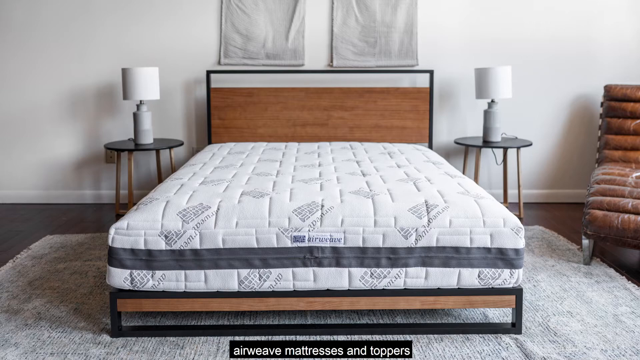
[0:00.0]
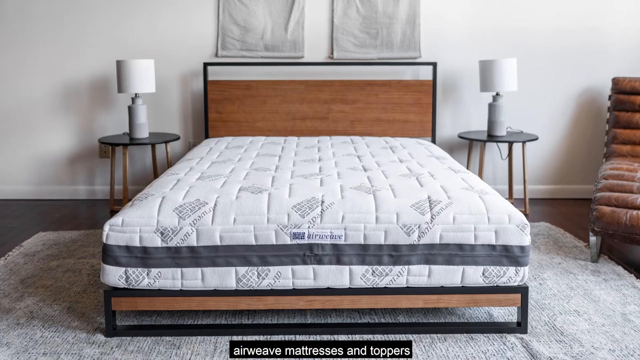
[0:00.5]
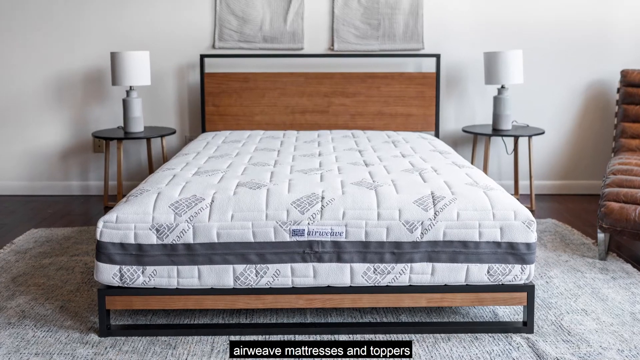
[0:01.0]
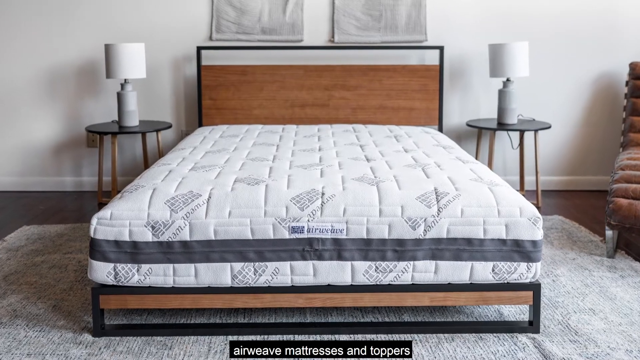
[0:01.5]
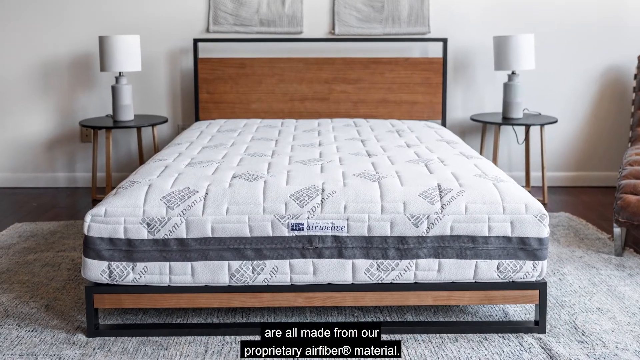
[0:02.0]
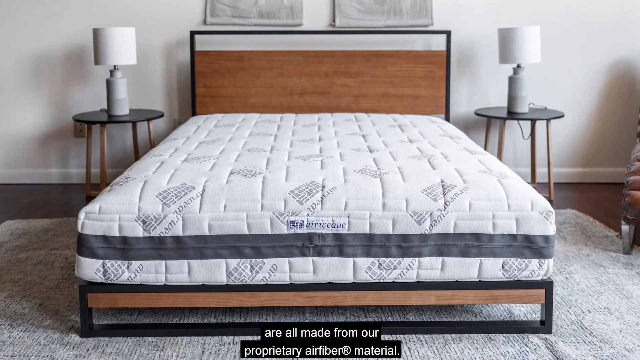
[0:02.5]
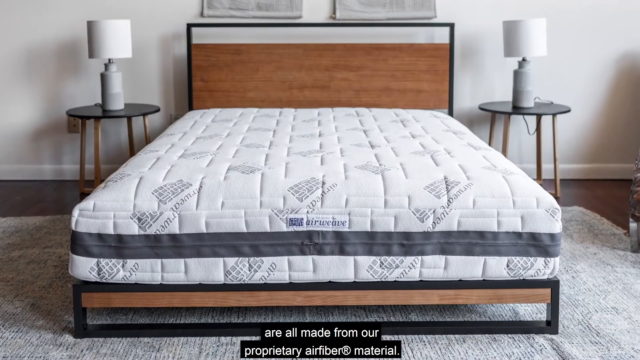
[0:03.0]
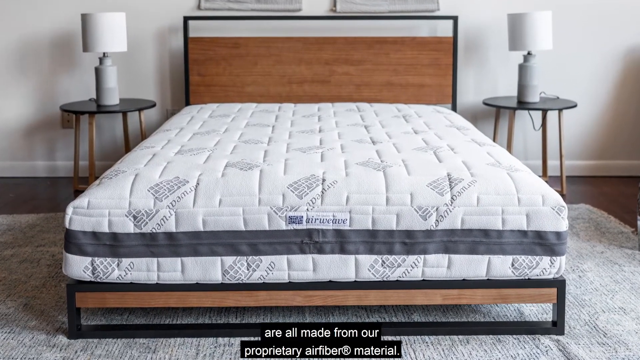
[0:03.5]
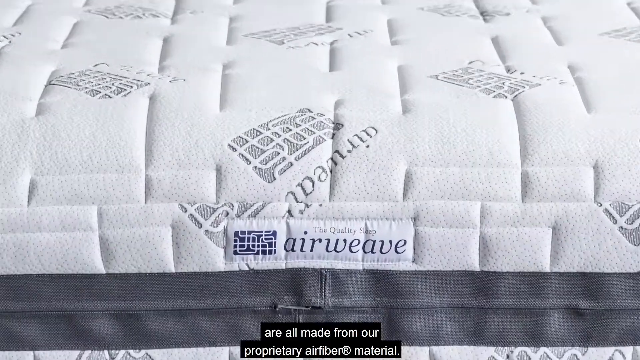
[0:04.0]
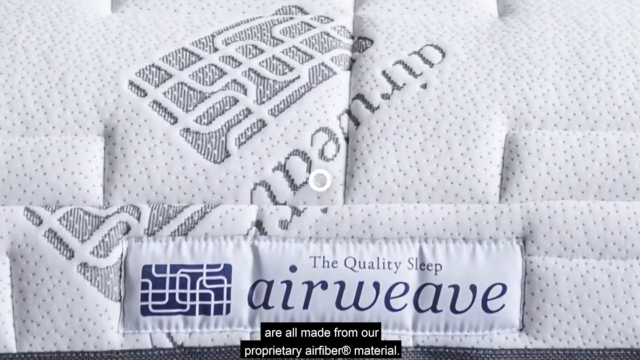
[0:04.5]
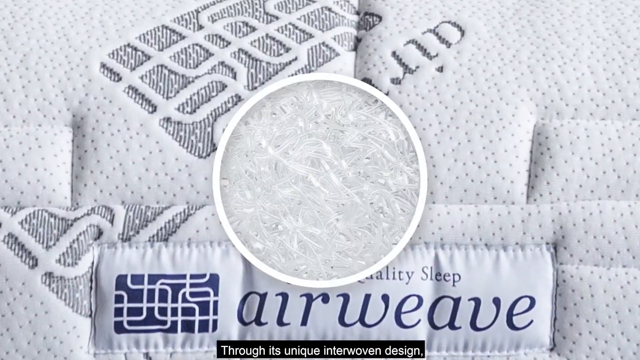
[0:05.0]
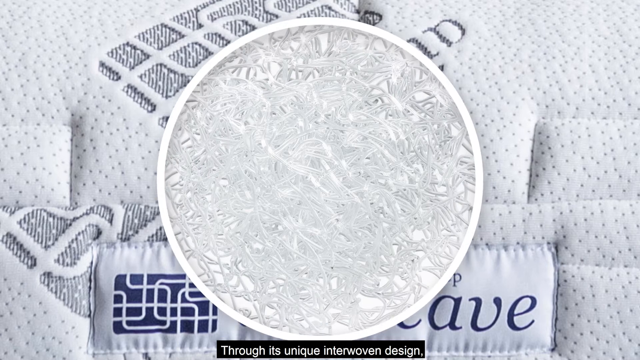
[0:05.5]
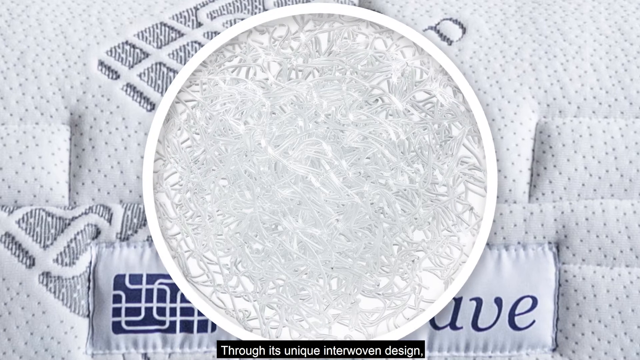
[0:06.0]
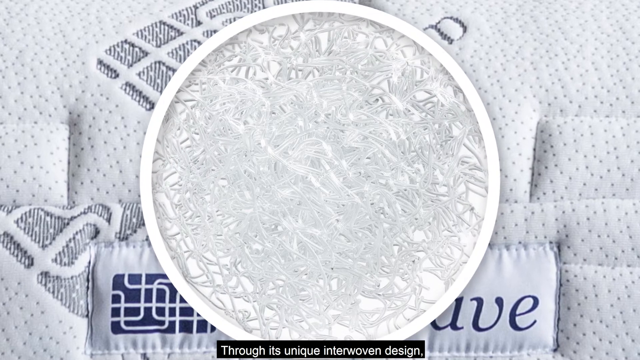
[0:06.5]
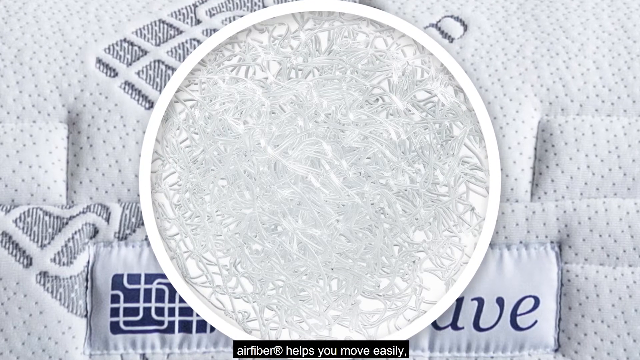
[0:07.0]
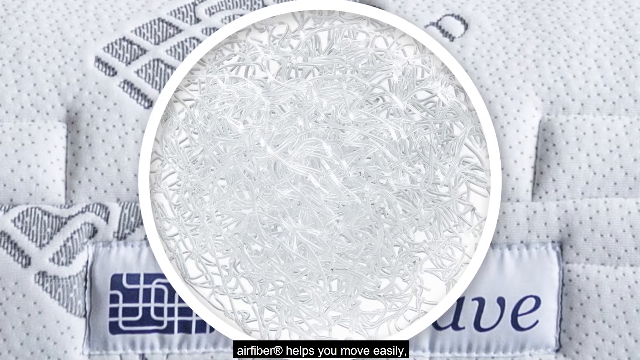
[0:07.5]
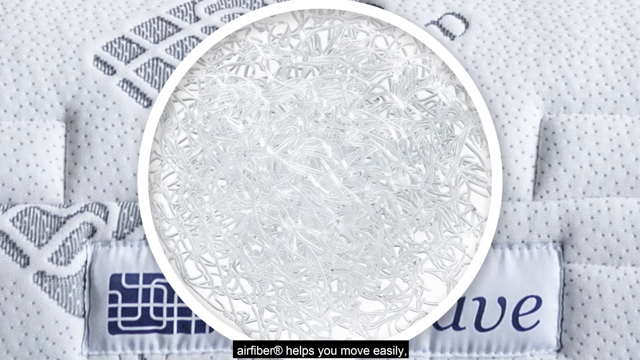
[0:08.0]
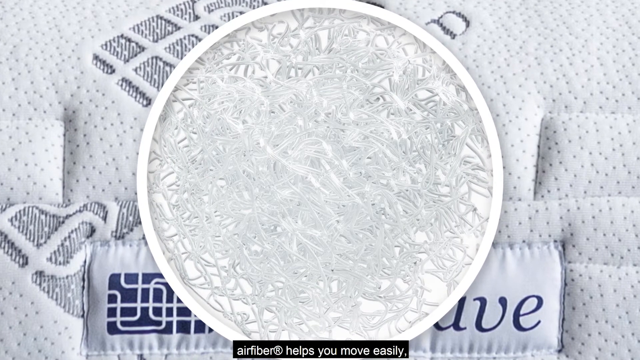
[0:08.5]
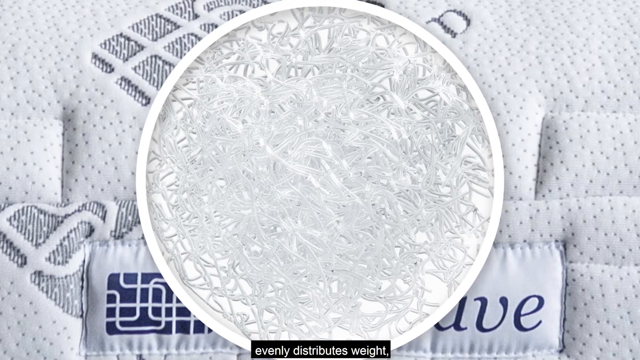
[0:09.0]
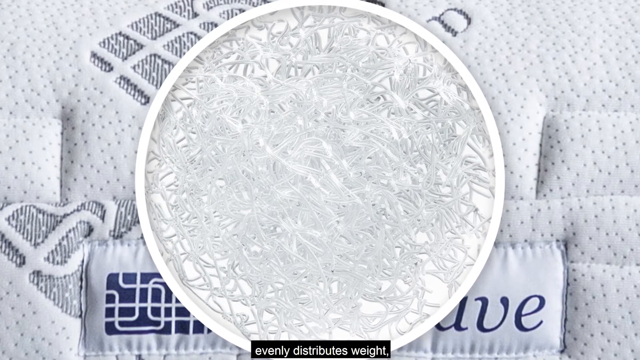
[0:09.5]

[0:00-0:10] A photo shows a bedroom with a large queen-sized mattress with no sheets or blanket on it, on a bed with a brown wooden headrest. There are two round black end tables with small light gray cylinder lamps with white lampshades. A brown sleeper sofa is to the right side, and a large gray area rug is on the ground. Two rectangular cloth squares hang above the headrest, possibly in place of artwork. The camera view zooms in onto the label on the foot of the mattress, which reads "The Quality sleep, Airweave." A large circle then appears on the screen, apparently showing a zoomed-in view of the fibers: very small, thin, skinny, bright white fibers that are kind of woven close to each other.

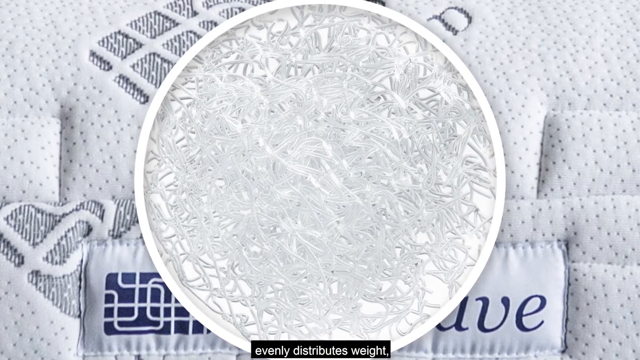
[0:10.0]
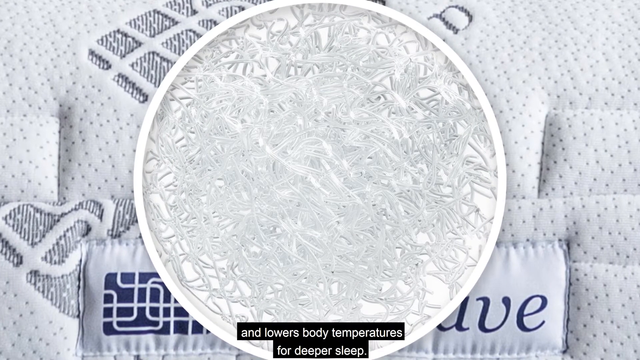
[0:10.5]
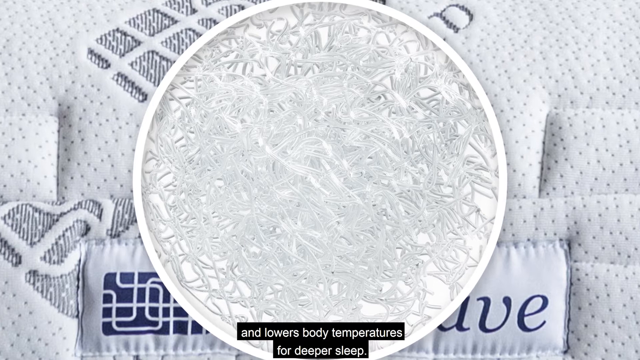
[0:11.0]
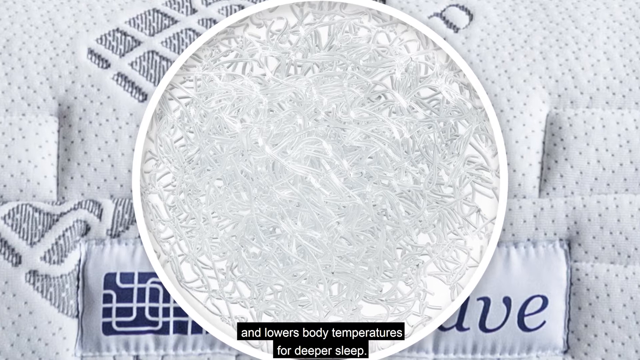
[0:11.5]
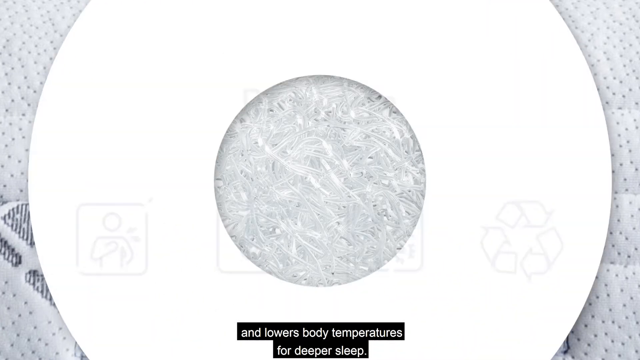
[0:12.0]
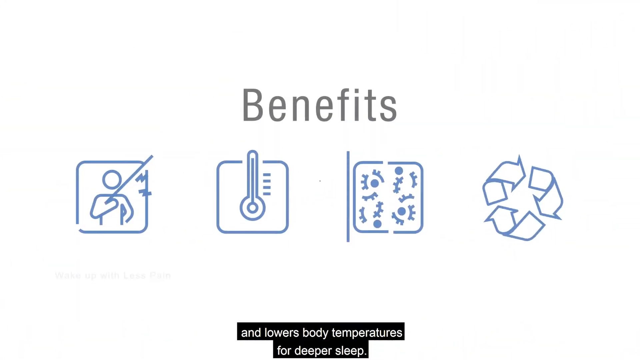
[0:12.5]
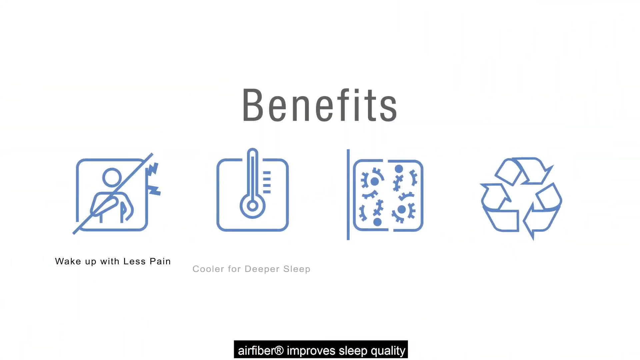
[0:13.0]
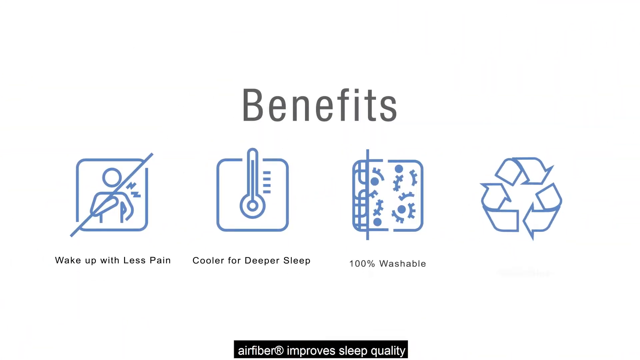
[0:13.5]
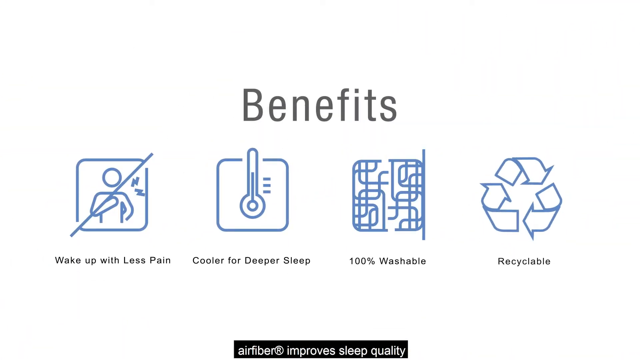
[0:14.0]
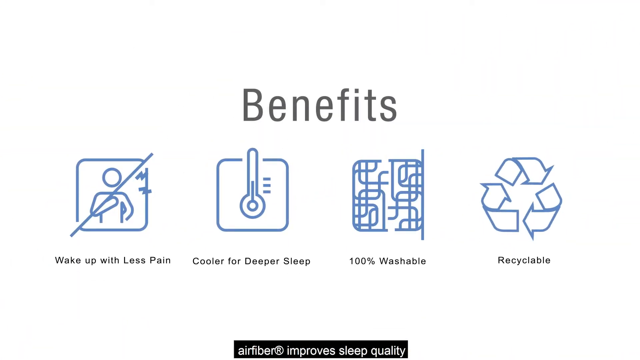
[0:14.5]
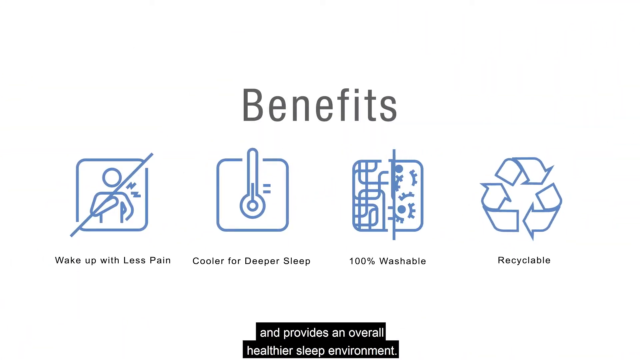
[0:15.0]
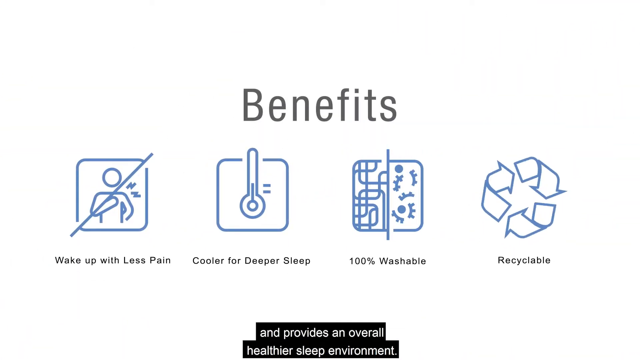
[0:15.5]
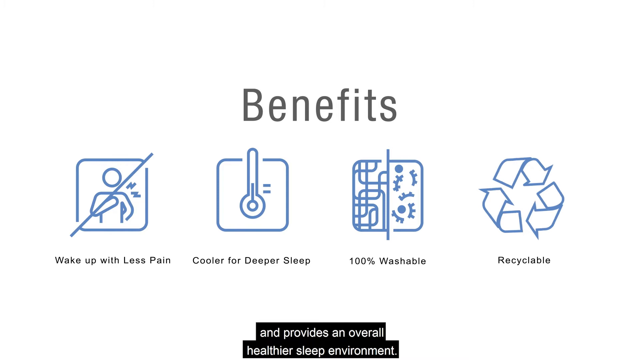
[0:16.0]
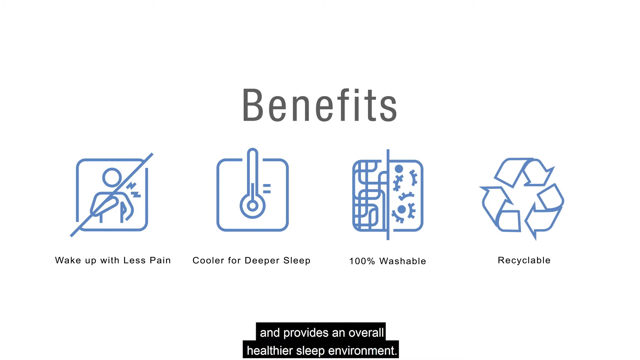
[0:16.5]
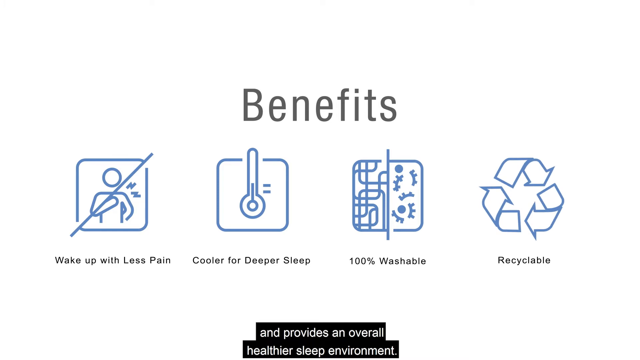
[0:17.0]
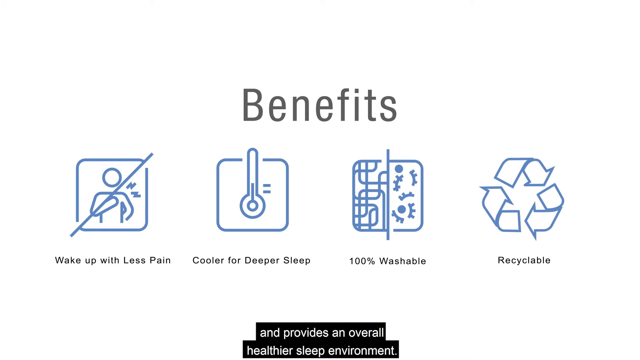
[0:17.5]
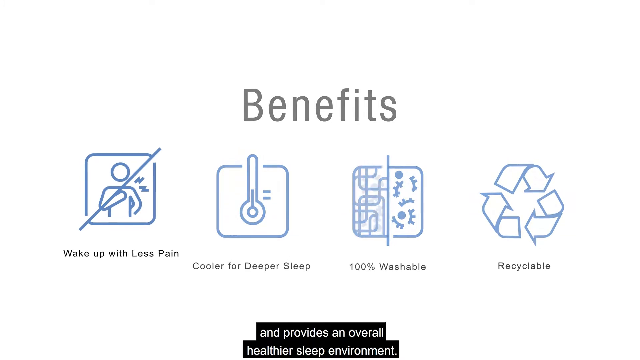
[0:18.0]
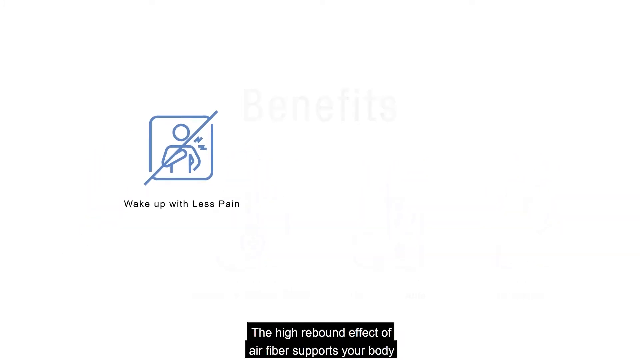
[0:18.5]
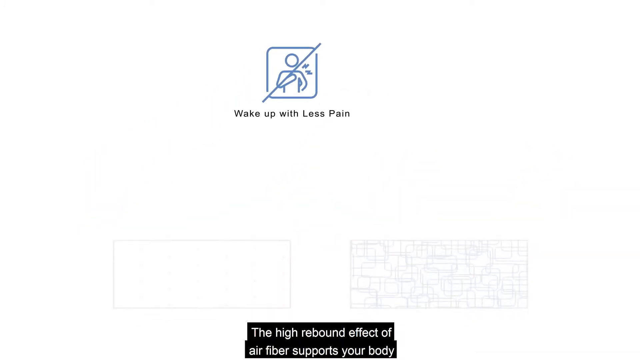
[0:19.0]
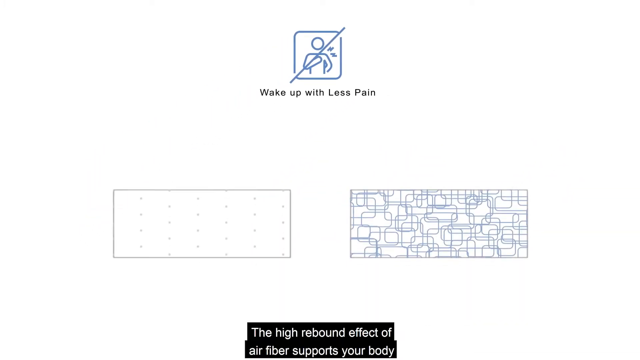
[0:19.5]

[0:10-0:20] A zoomed-in view of the foot of the mattress is shown, with a large white circle on the screen showing a zoomed-in view of the mattress's fibers, which look like long, thin, string-like lines all tangled and woven together. The screen changes to a white background with "Benefits" in large black letters in the middle, and four icons underneath. On the left is a square icon that seems to have the outline of a person, with lines coming from the shoulder that look like it is in pain; this box is crossed out, and underneath it small black letters read "Wake up with less pain." To its right is another box with a large thermometer inside and black text underneath reading "cooler for deeper sleep." To the right of that is a box with what looks like lots of tangled blue lines inside; a vertical line kind of moves from the right side of the box toward the left and stops halfway, and on the right side of the box appears a design that kind of looks like it may be bacteria. Underneath, small black text reads "100% washable." To the right of that is a recycling symbol with three arrows going around in a triangular shape, with black text underneath reading "recyclable." The first icon, the square with the man and the pain lines by his shoulder, then moves to the top center of the page while the rest of the graphics disappear. Two large rectangular boxes appear at the bottom of the screen: the left one seems to have just light black small circular dots all over it, and the right one has an intricate design of blue box outlines all over it, kind of overlapping each other and forming many small rectangular shapes.